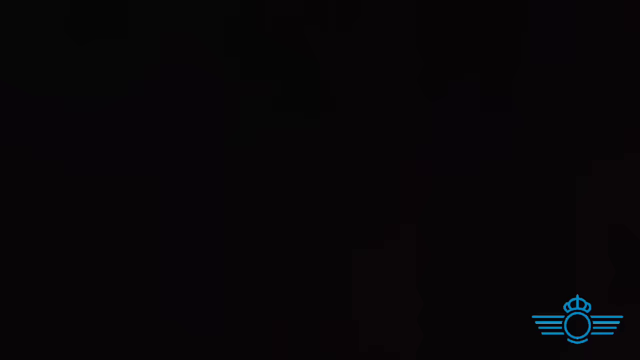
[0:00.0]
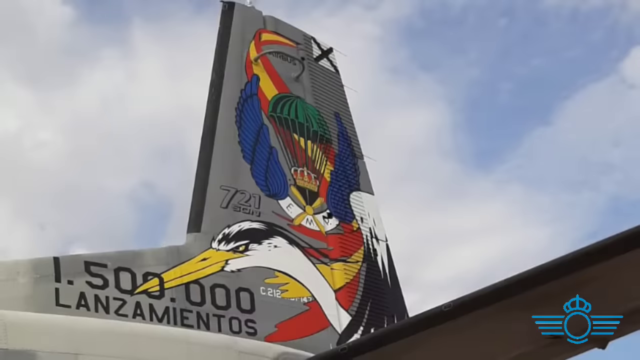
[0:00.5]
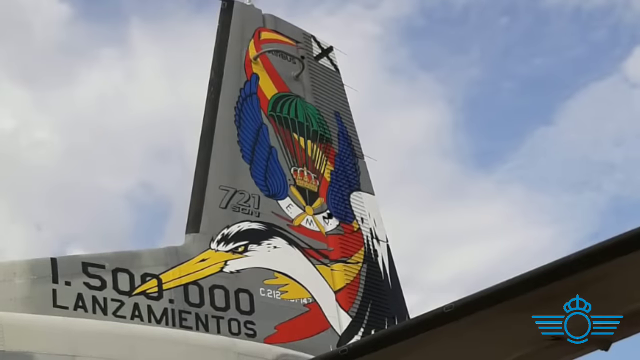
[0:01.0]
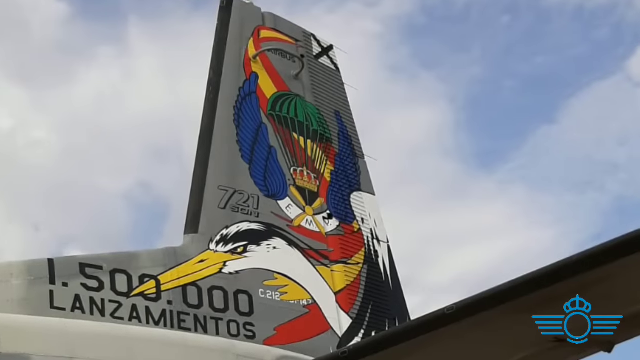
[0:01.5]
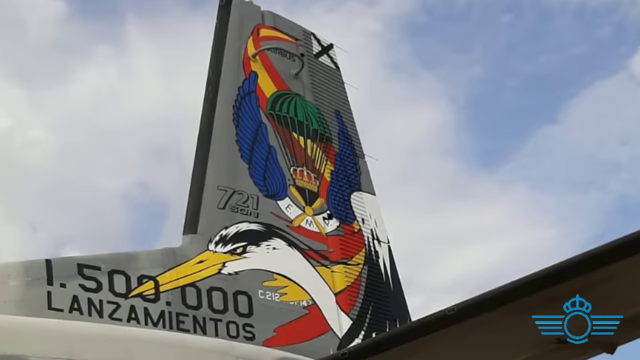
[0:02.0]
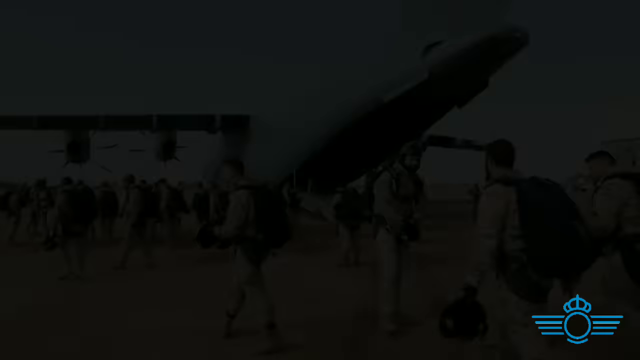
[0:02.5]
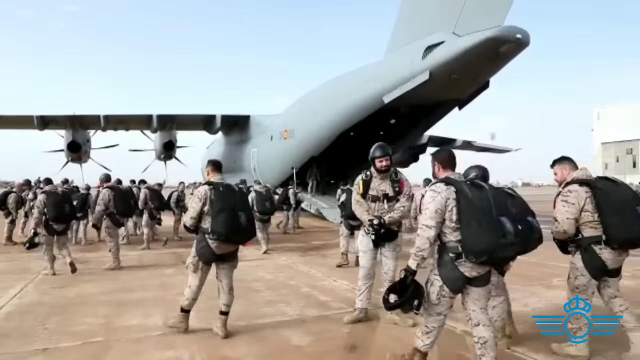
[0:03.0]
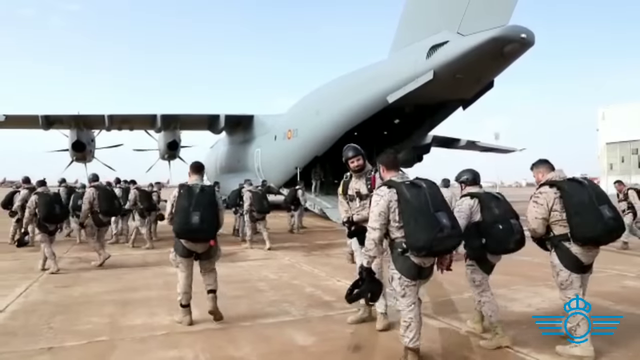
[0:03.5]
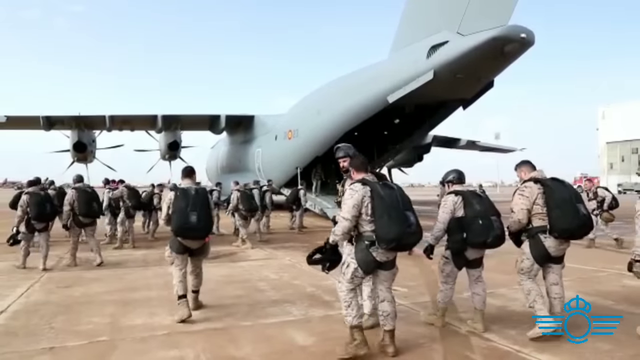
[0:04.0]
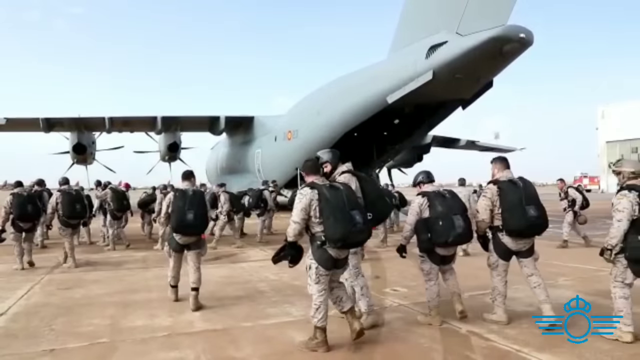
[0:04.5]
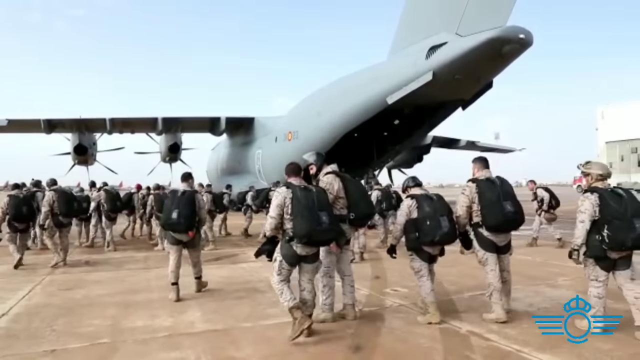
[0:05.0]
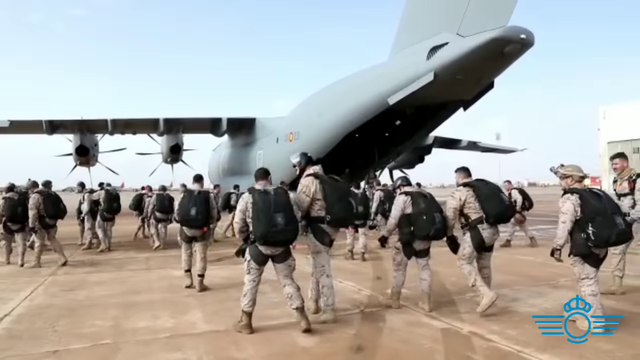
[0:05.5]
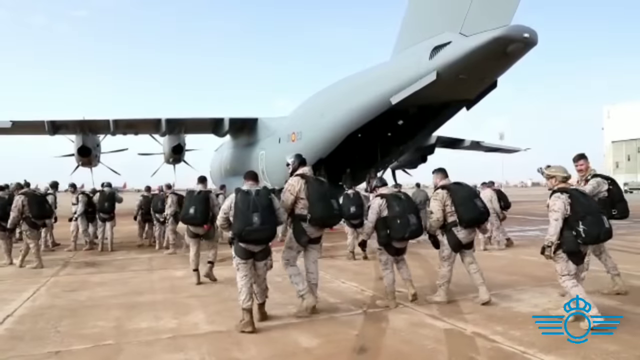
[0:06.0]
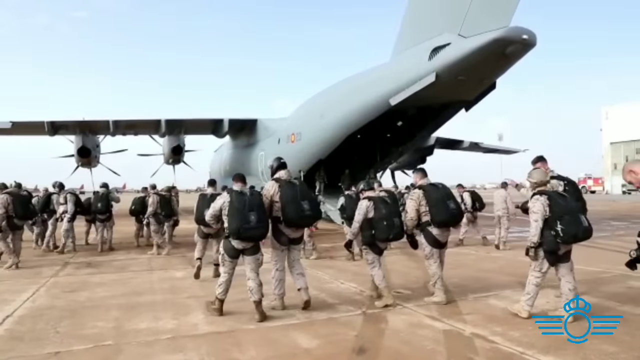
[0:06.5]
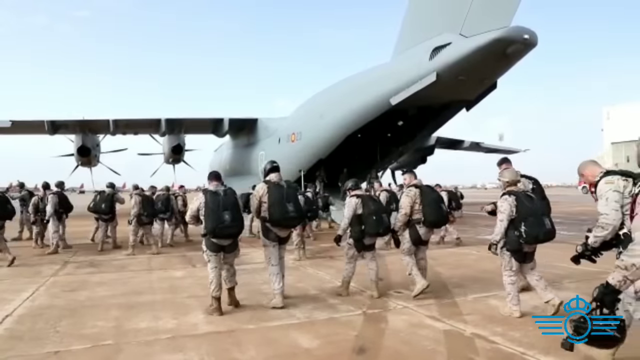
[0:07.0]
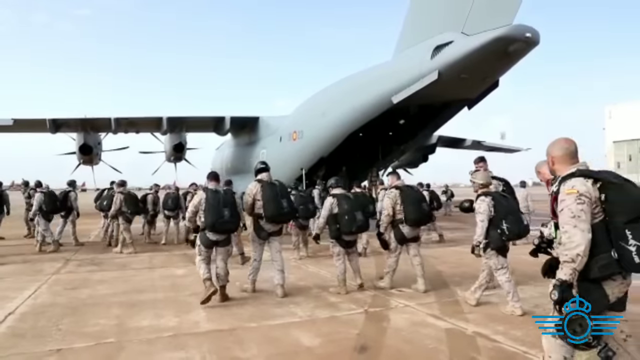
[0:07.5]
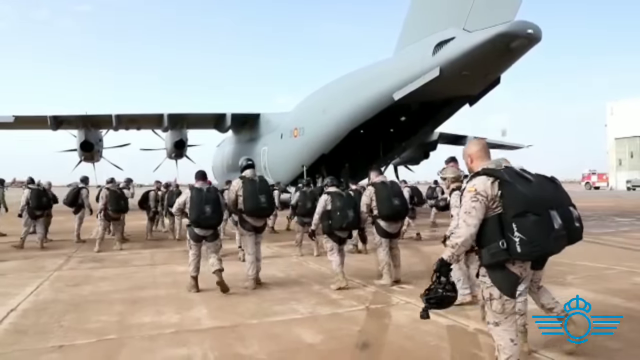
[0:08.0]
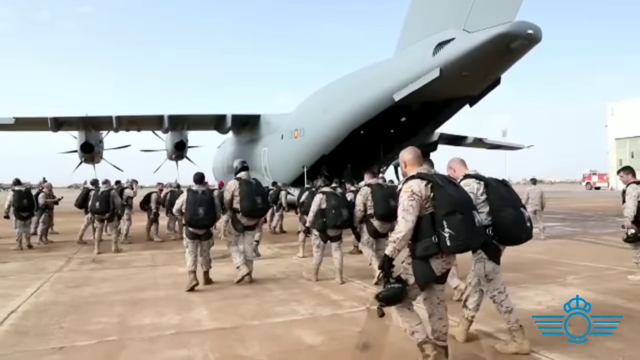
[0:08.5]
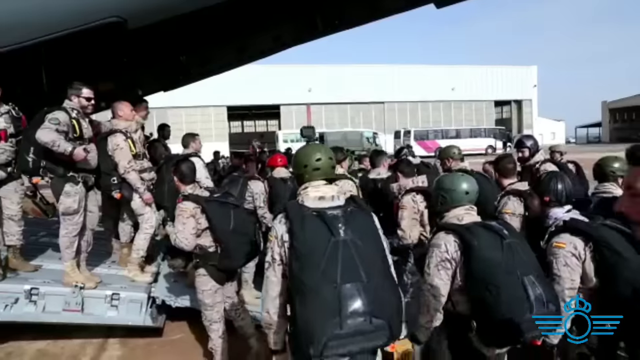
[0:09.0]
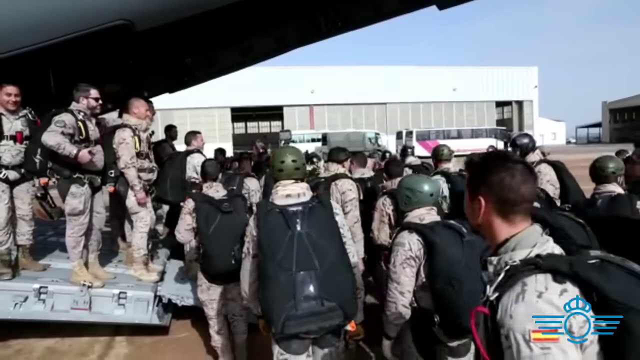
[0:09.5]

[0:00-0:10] The video opens on what appears to be the tail end of an airplane, or possibly a building; it is brightly colored, and there appears to be an eagle on it. The sky is cloudy, and it appears to be daytime. The scene quickly moves to soldiers walking up to a plane. They wear army fatigues and have black backpacks on their backs. Half of them appear to have black helmets on their heads, while the other half wear no helmets of any sort. A large airplane is visible.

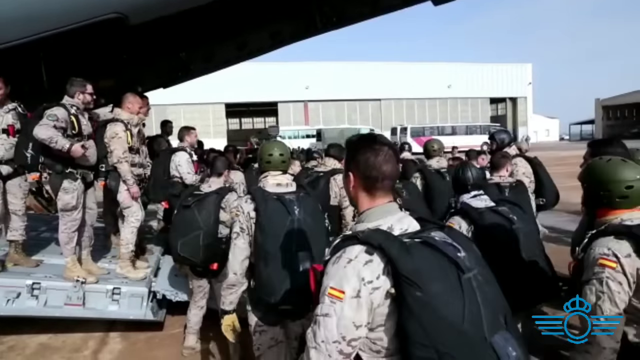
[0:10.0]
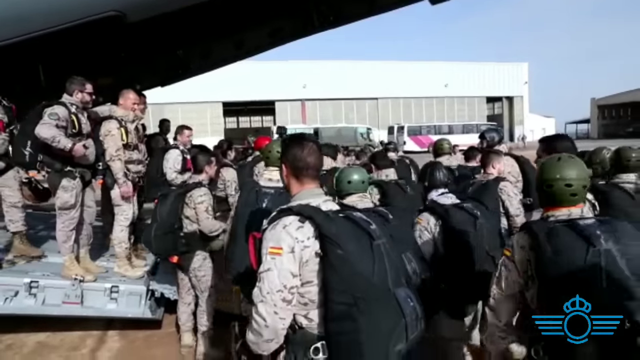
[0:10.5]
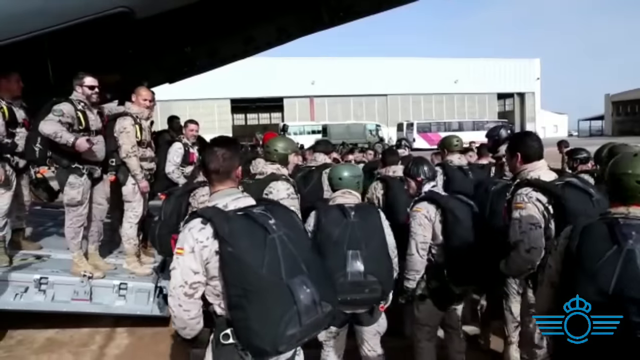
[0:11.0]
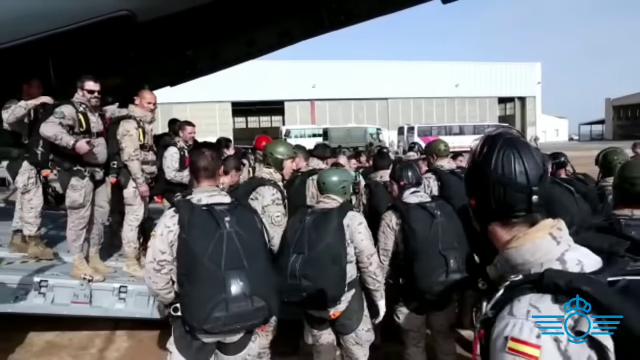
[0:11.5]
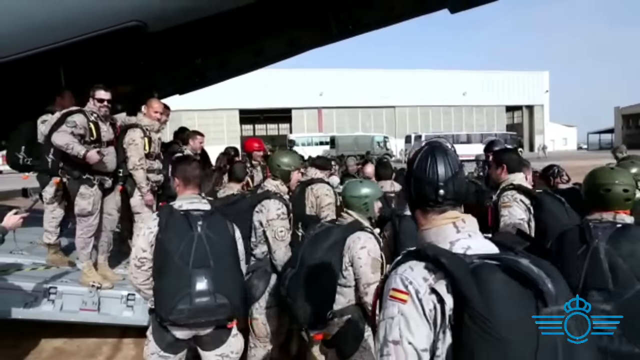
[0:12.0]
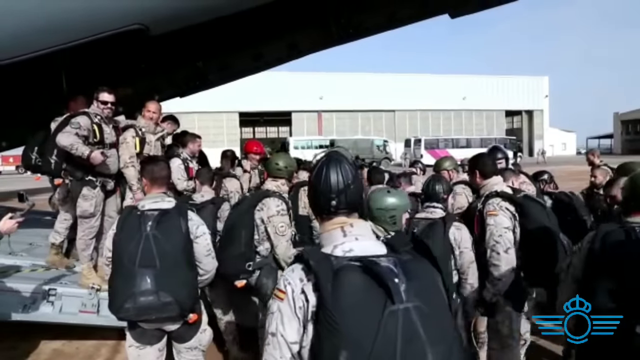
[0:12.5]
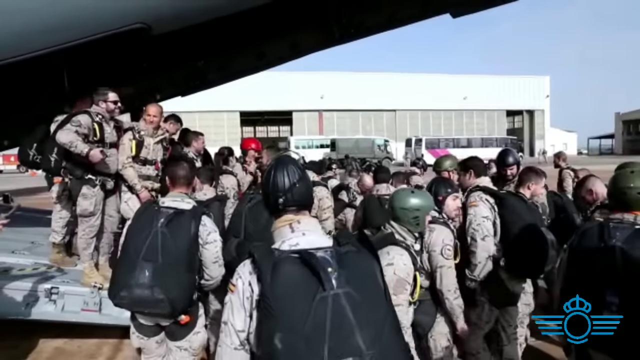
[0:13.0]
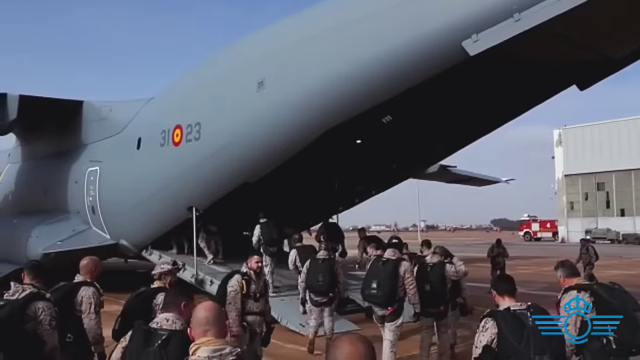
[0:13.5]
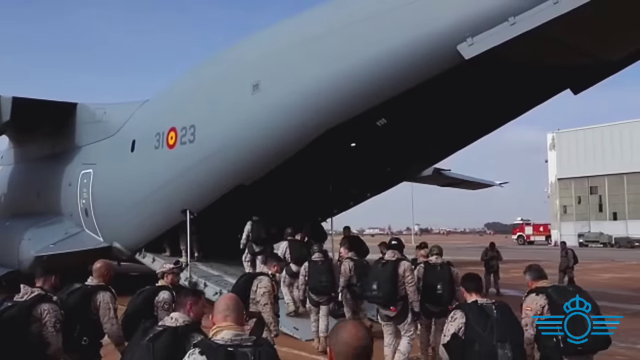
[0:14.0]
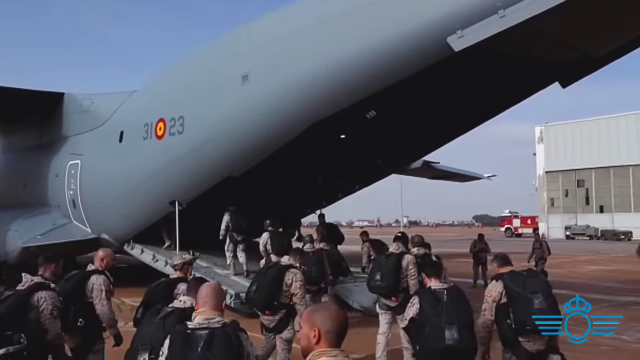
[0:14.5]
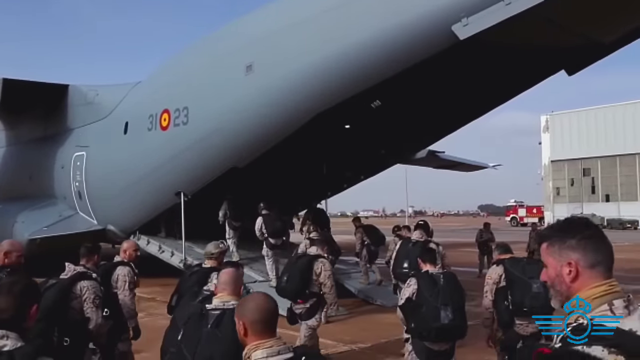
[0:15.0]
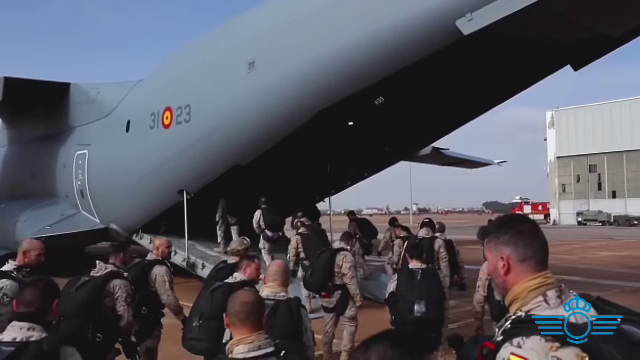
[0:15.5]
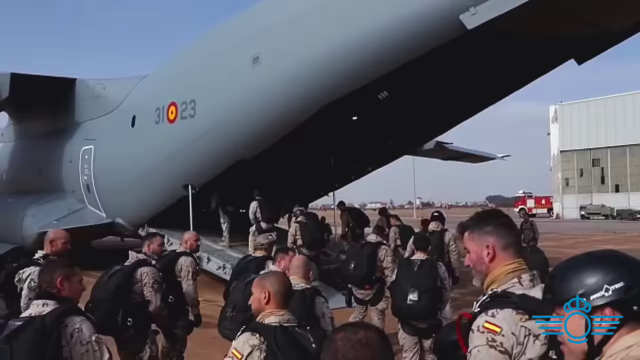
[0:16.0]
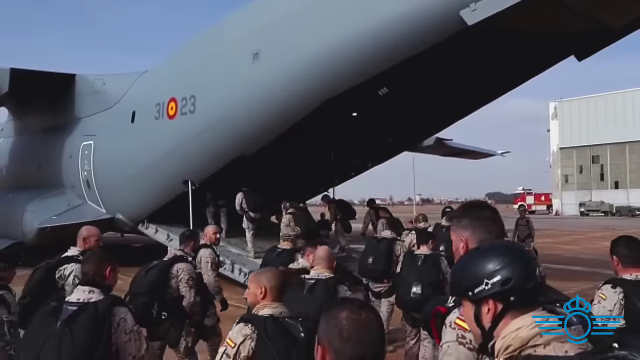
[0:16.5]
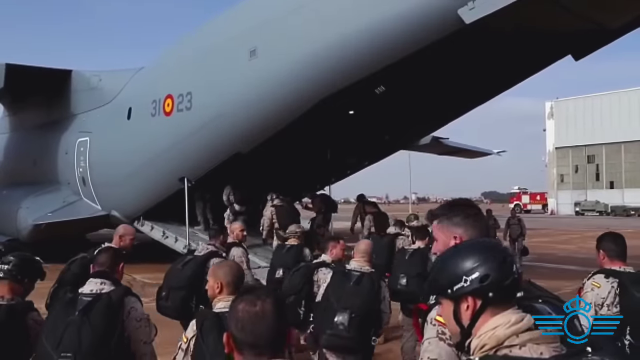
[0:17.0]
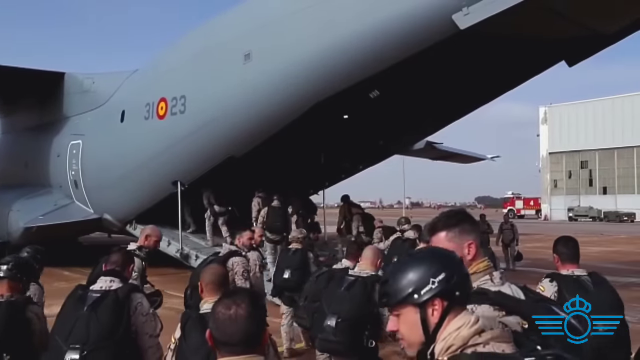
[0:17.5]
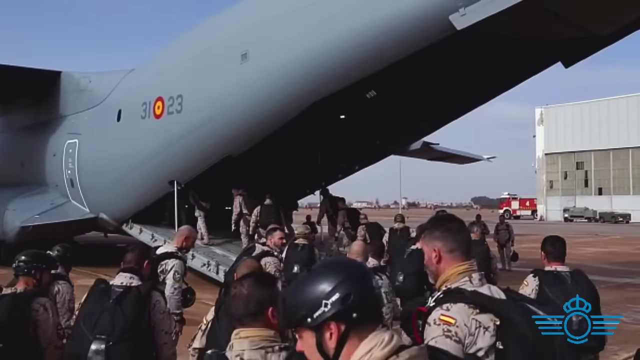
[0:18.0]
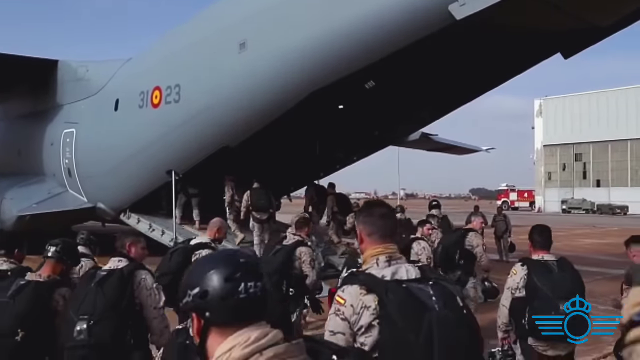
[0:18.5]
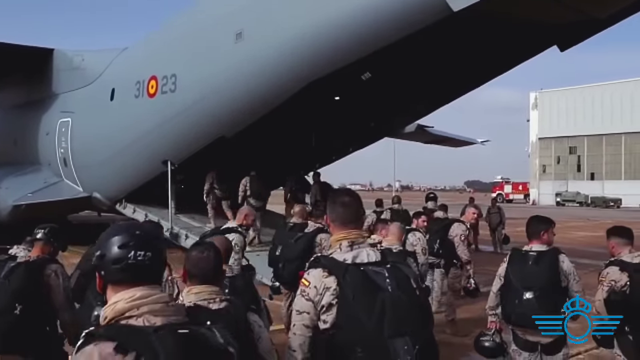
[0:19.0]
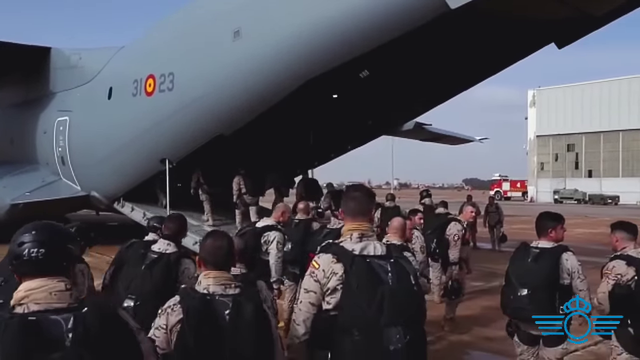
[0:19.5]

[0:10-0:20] The servicemen are all gathered together, apparently outside an airport. In the background is a building with lots of windows, and off to the right side of the screen is what appears to be another building that looks like a hangar for airplanes. The servicemen are gathered waiting to board the aircraft. Half of them wear protective helmets, and the other half have no helmets. They all wear service attire and have large black backpacks on their backs.